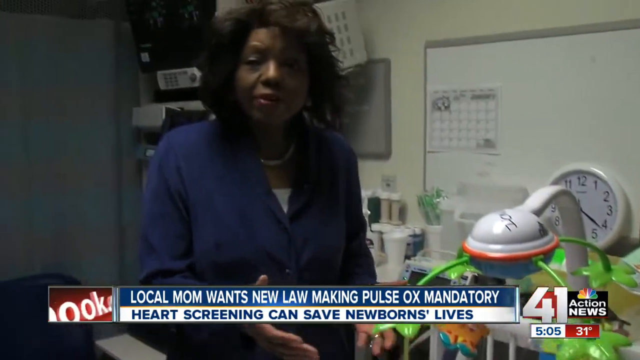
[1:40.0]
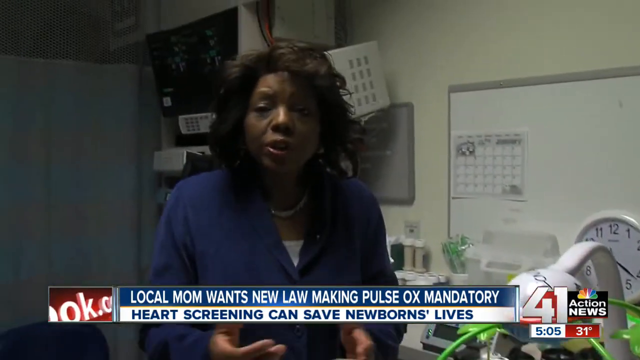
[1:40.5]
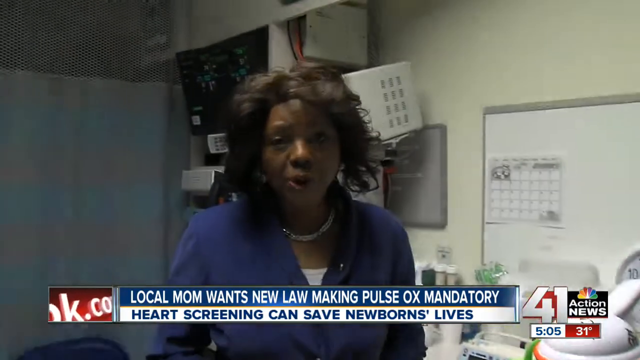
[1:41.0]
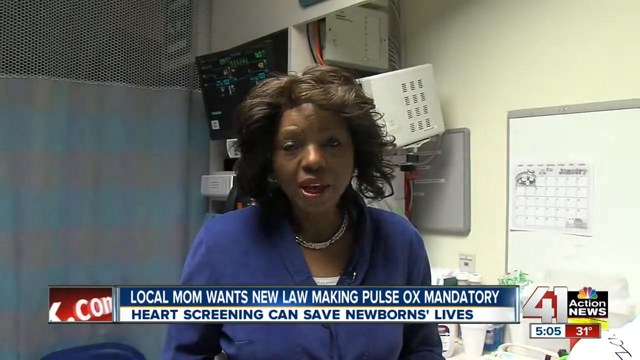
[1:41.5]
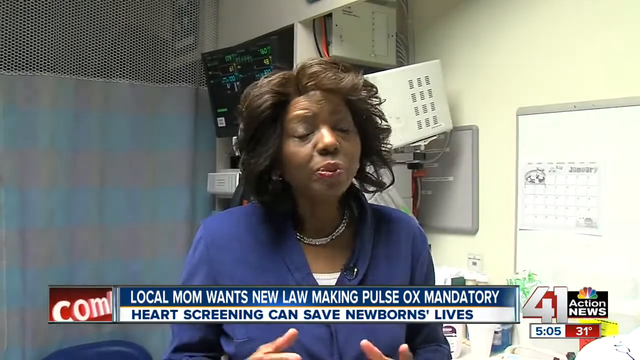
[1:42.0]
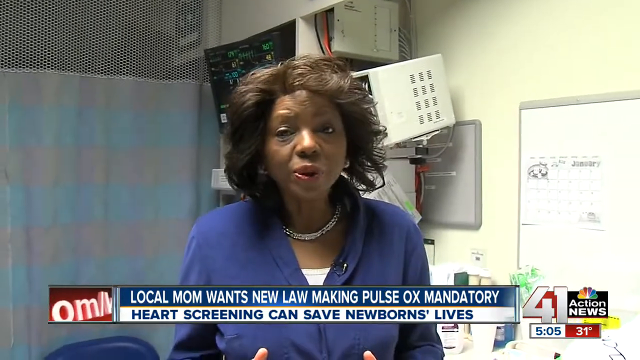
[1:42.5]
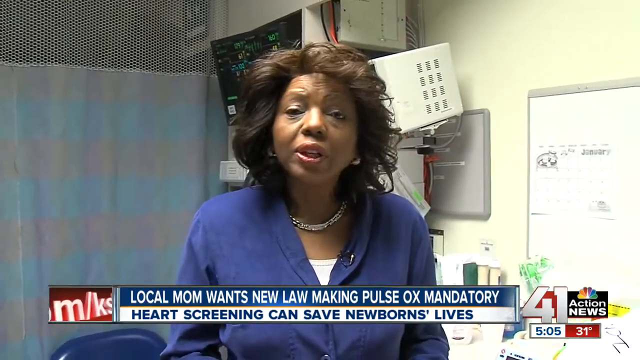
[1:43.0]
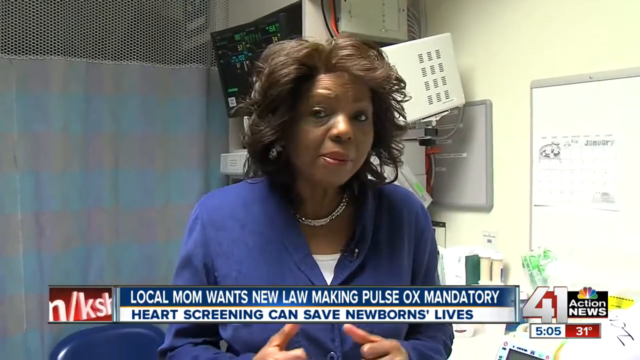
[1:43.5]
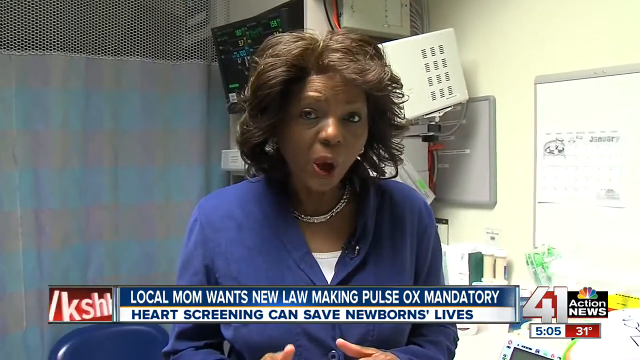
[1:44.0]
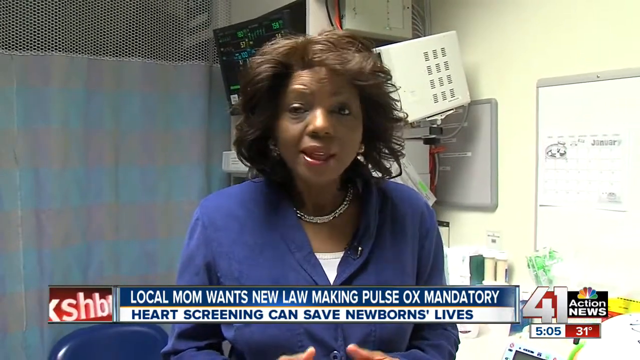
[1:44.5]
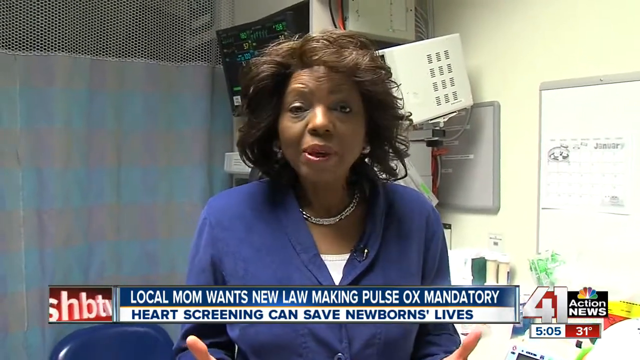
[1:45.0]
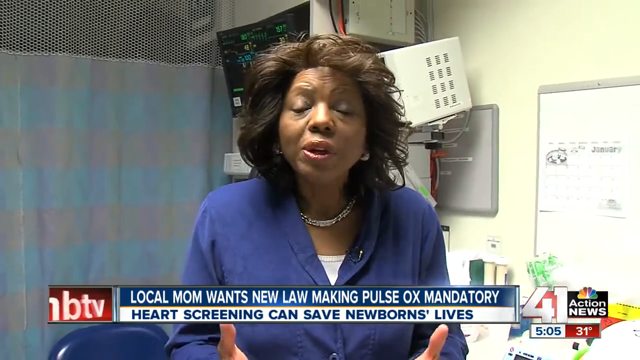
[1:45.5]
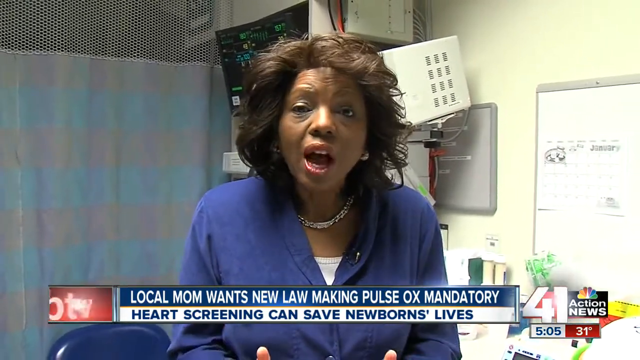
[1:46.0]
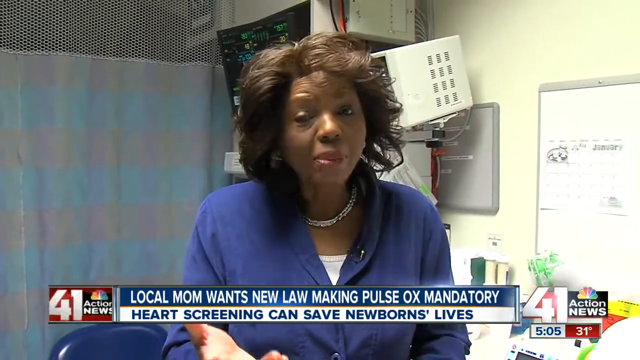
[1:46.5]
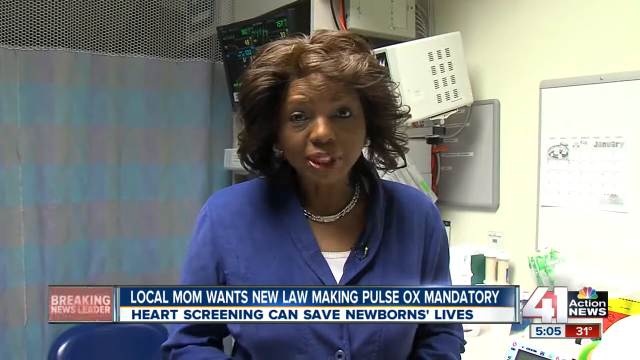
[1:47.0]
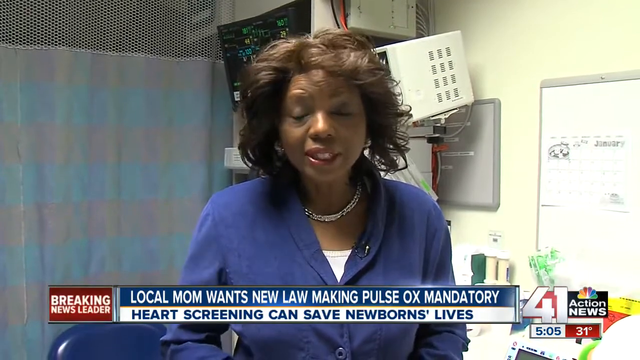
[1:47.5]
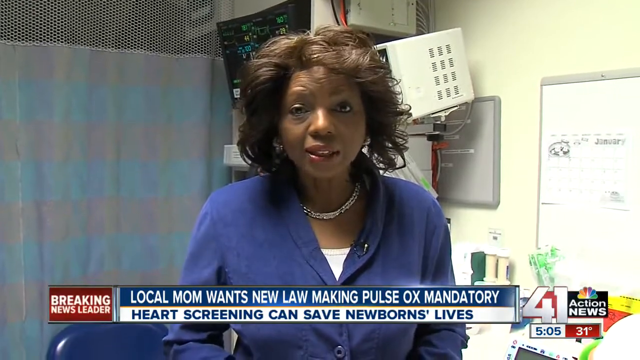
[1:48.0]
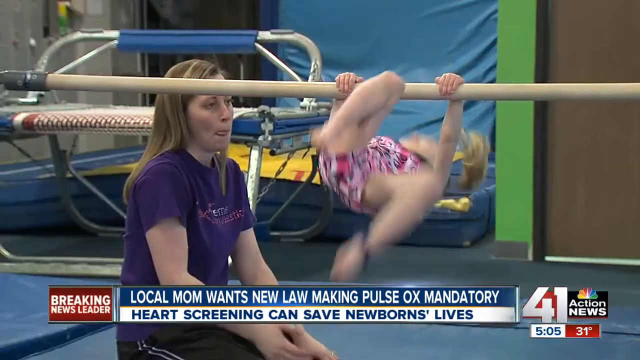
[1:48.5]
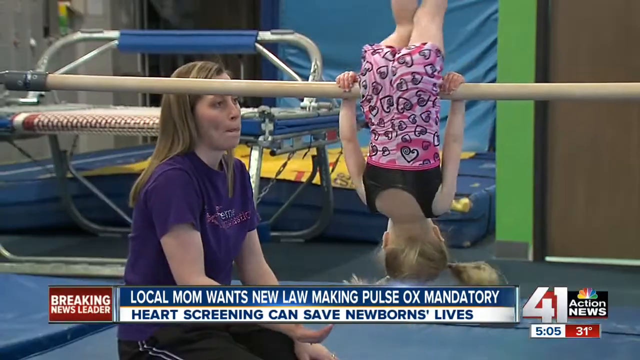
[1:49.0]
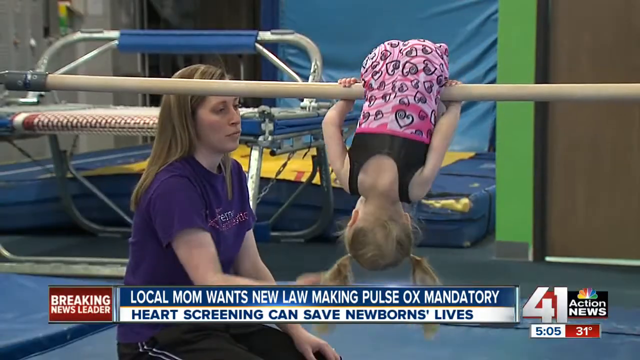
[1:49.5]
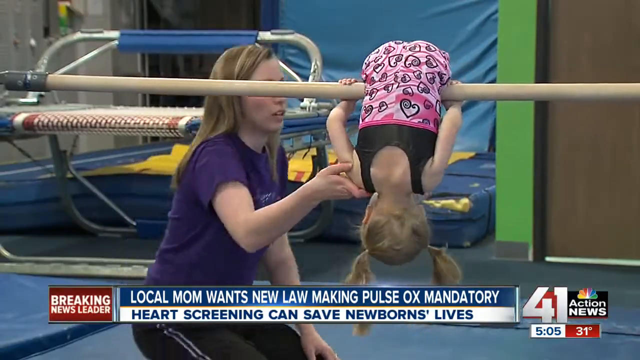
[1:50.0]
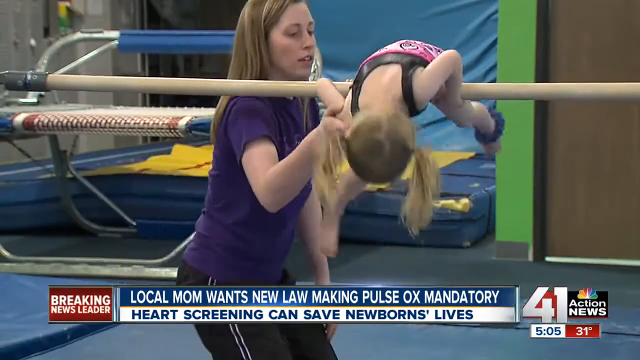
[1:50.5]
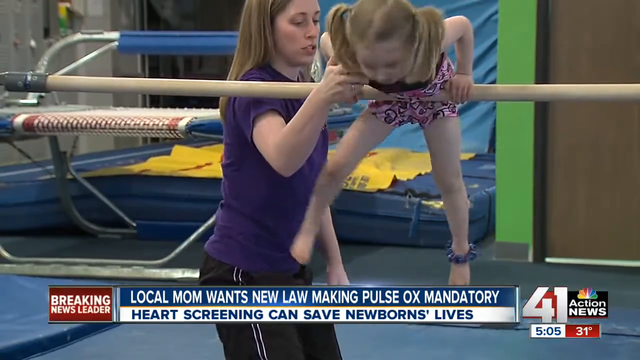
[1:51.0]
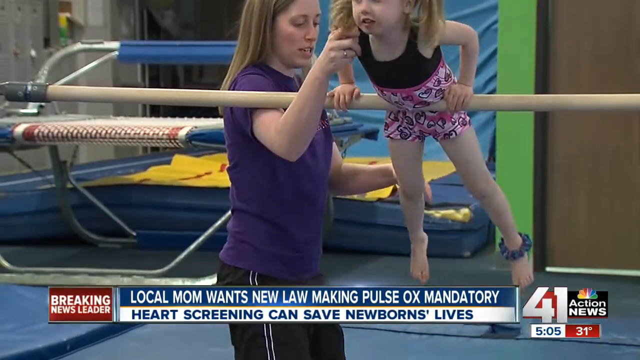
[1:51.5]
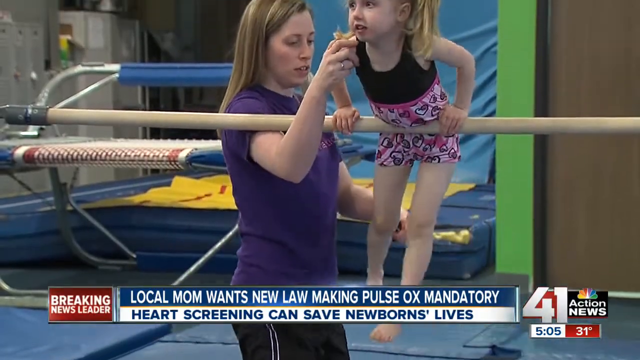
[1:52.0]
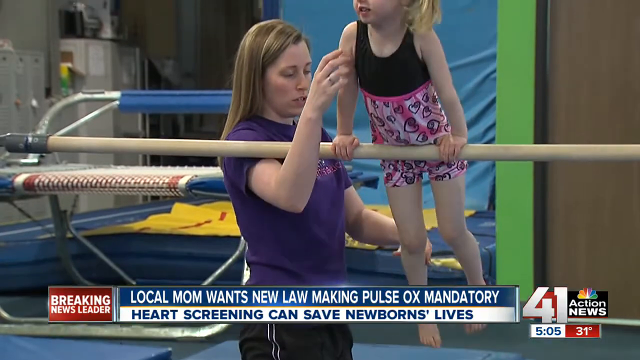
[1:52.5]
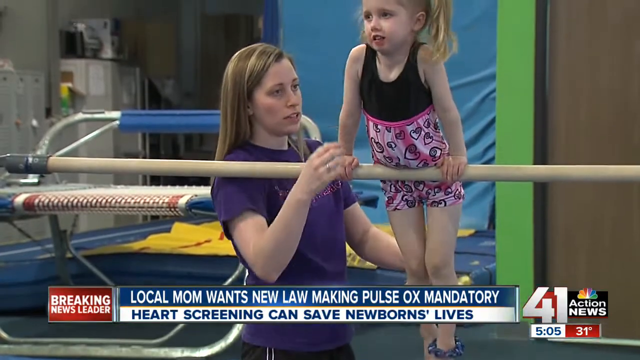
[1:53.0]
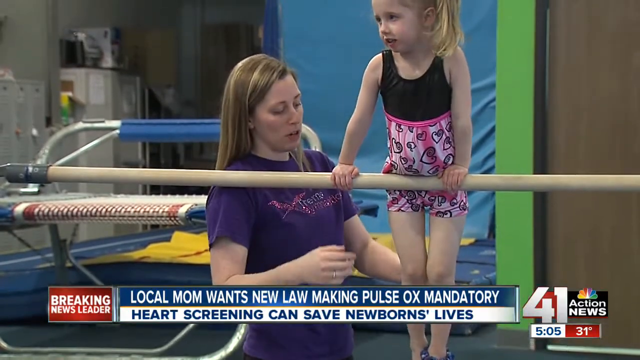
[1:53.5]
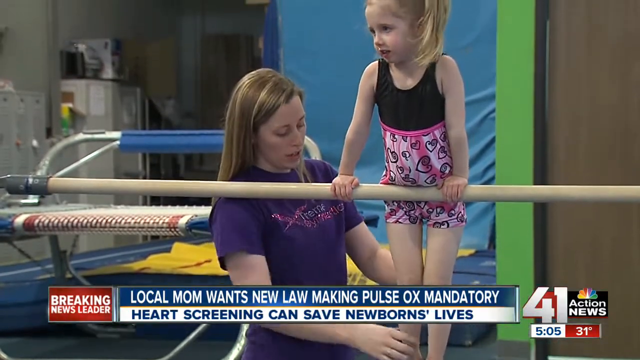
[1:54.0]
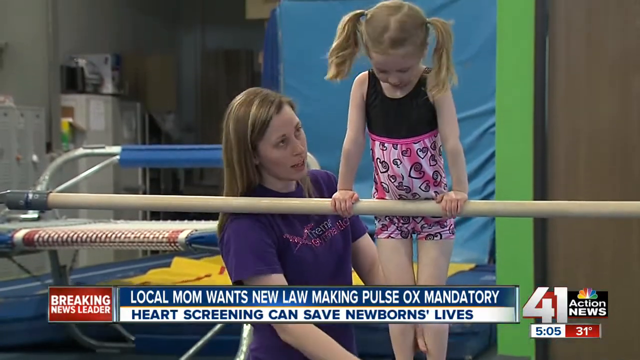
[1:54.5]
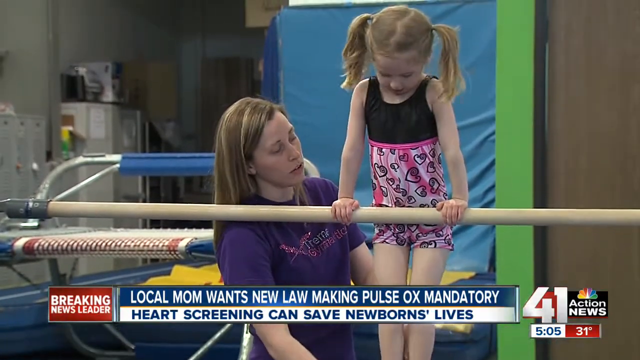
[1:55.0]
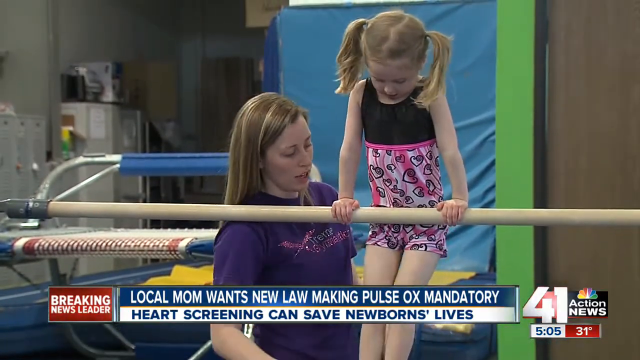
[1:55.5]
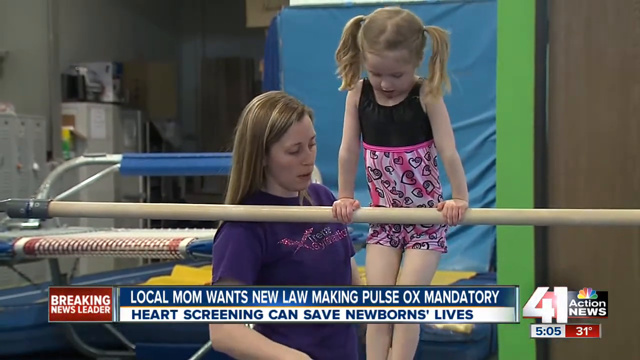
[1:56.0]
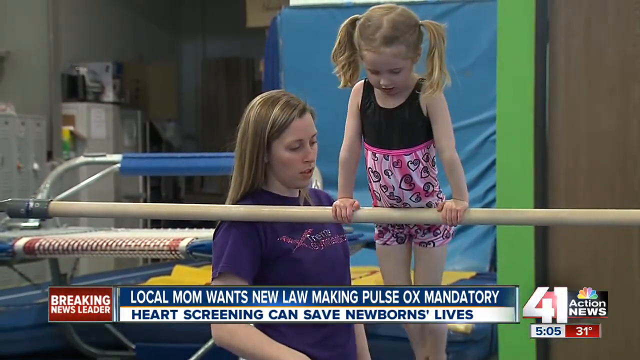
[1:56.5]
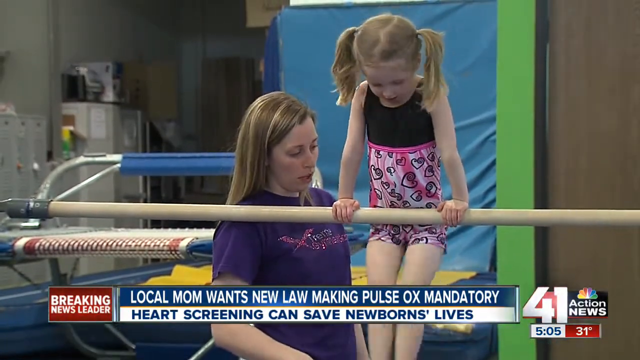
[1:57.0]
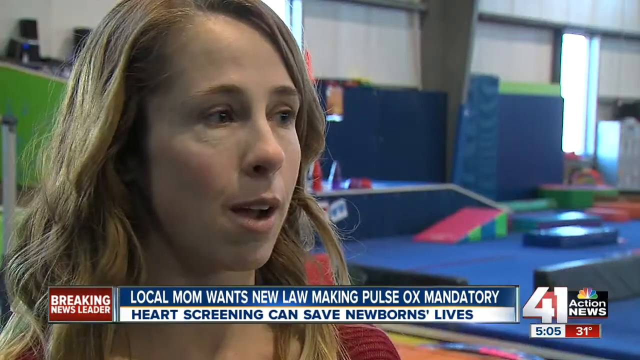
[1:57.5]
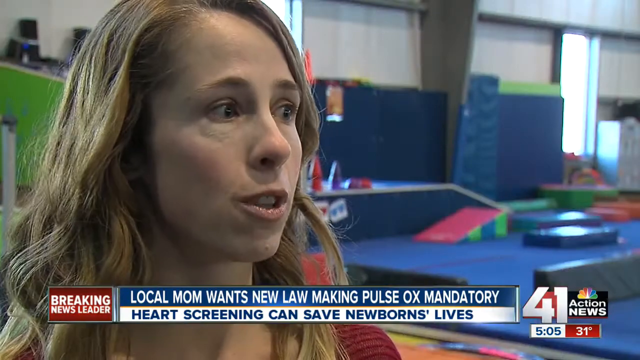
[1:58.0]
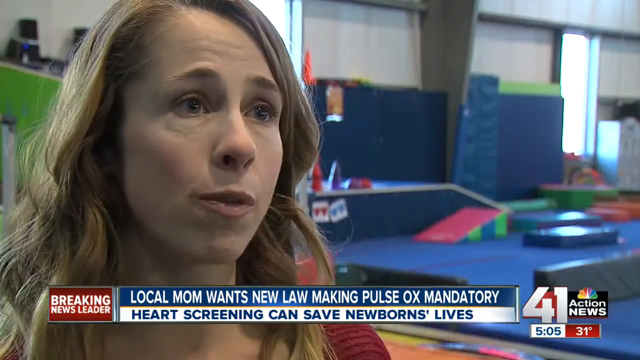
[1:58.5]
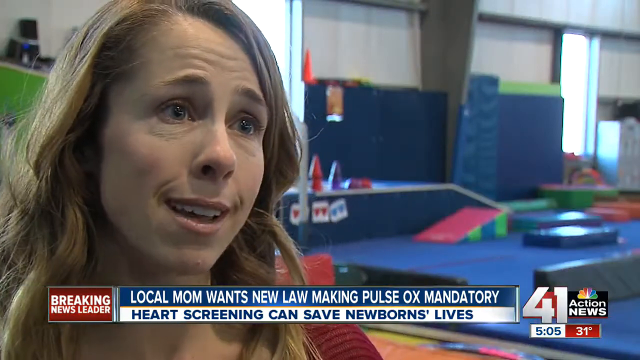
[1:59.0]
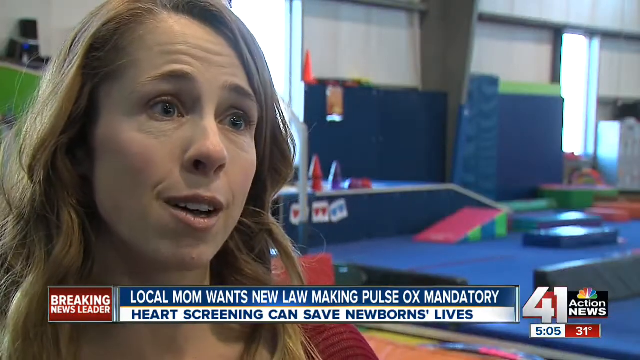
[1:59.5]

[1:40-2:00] The woman wears a blue shirt and a necklace; she is Black with shoulder-length black hair. She talks to the camera about the issue, making hand gestures while looking at the camera. The sport looks to be early gymnastics for young children. An adult woman wears a purple shirt and black pants, is white, has blonde hair and a ring on her right hand. The small girl is white, has blonde ponytails, and wears a suit with a bit of black and pink. The adult woman helps the child stand in a proper position while she swings her legs.